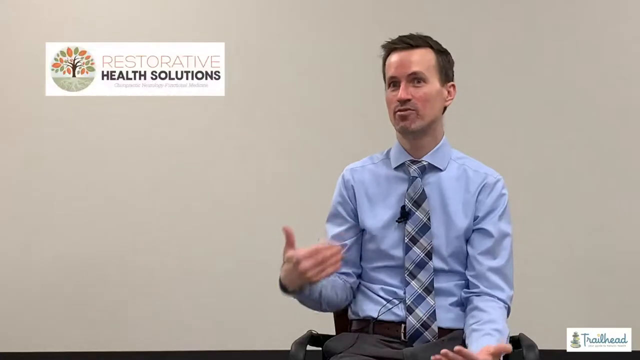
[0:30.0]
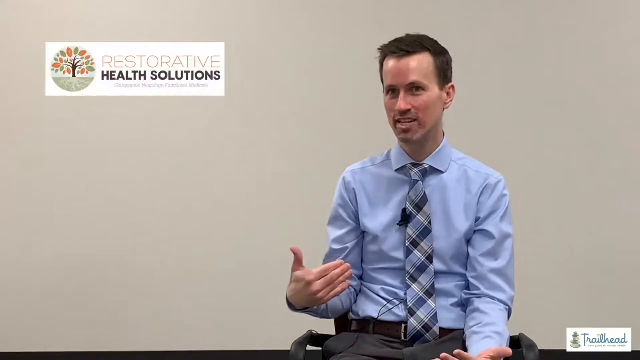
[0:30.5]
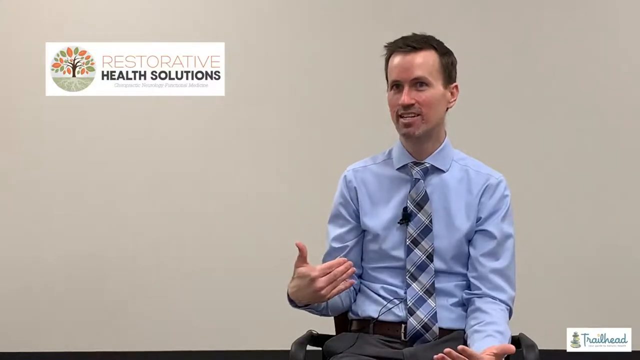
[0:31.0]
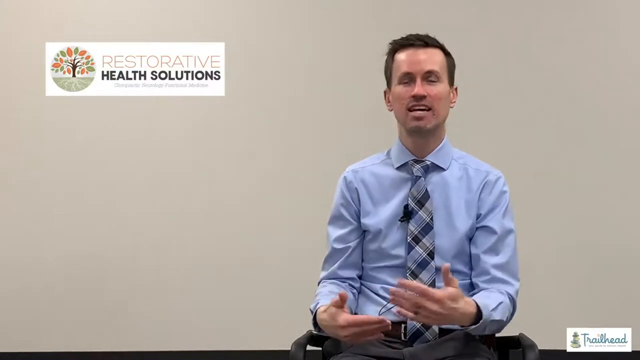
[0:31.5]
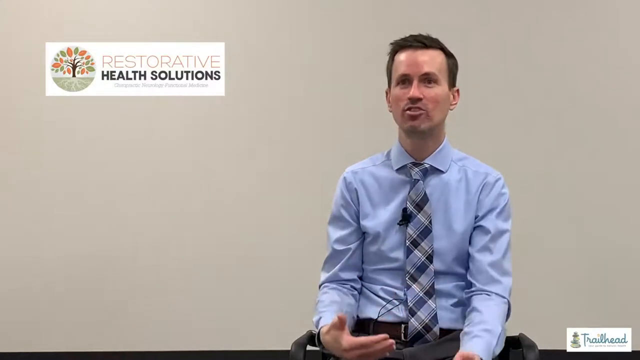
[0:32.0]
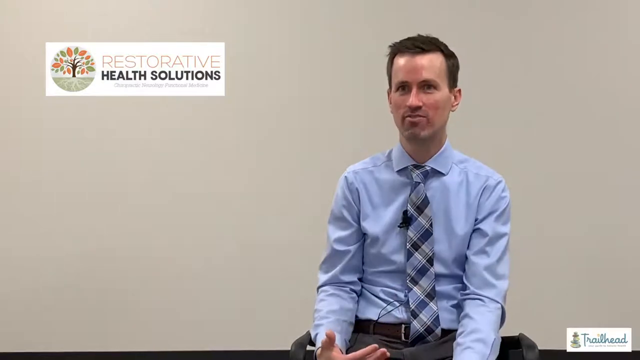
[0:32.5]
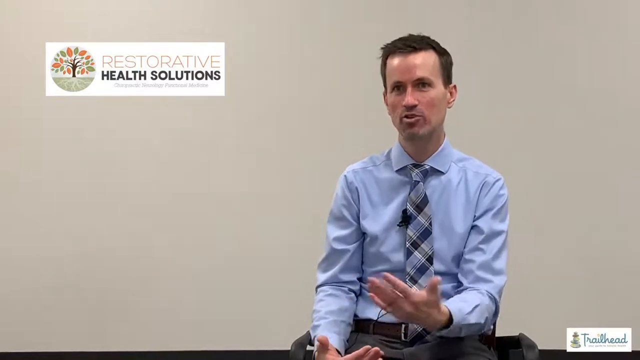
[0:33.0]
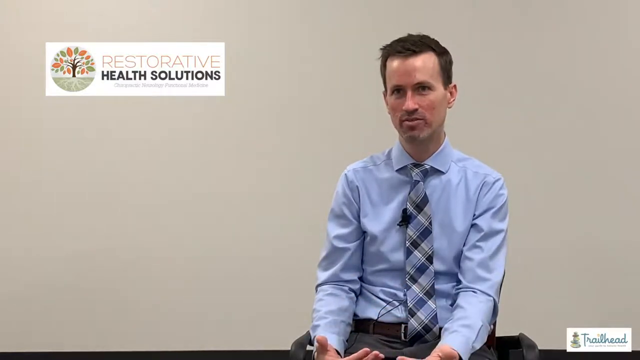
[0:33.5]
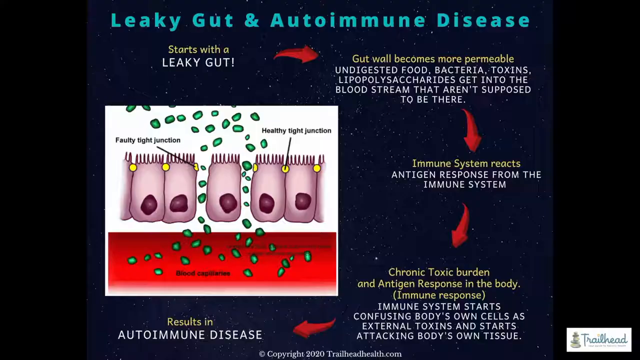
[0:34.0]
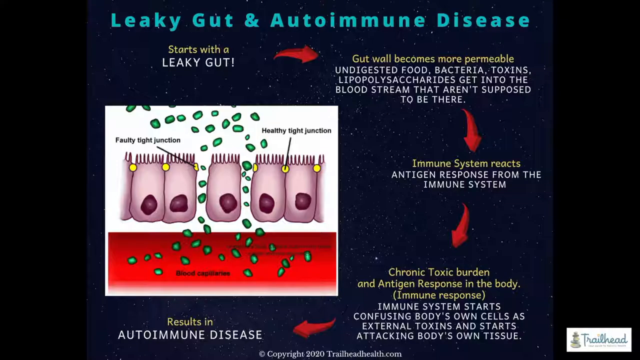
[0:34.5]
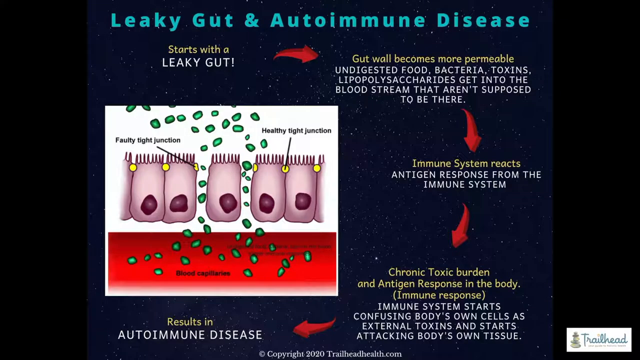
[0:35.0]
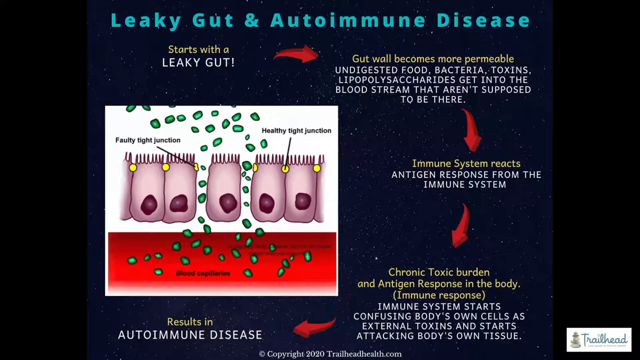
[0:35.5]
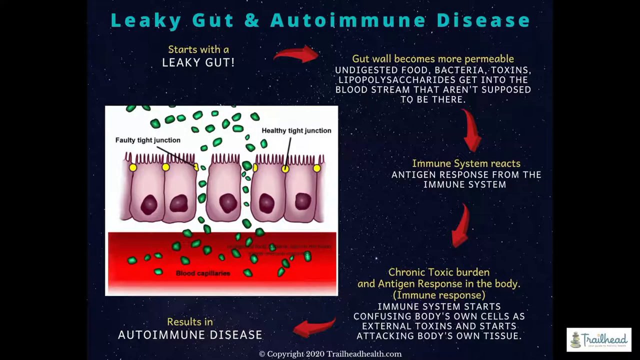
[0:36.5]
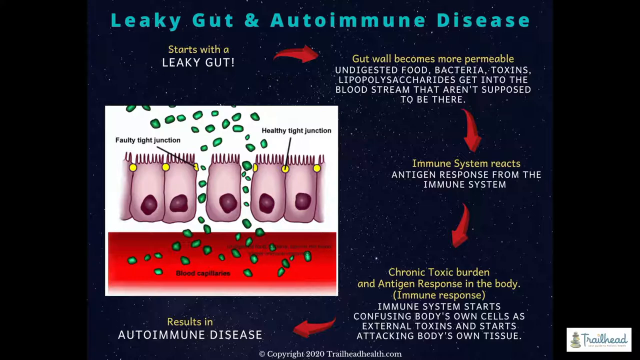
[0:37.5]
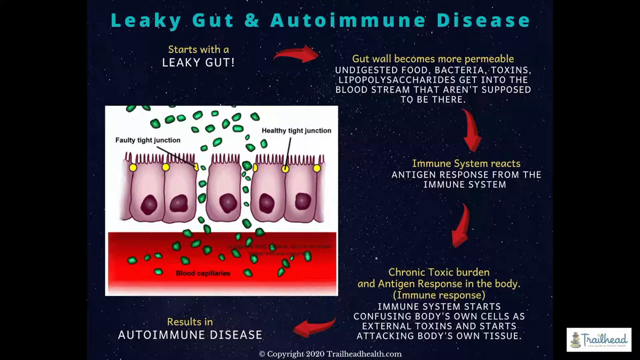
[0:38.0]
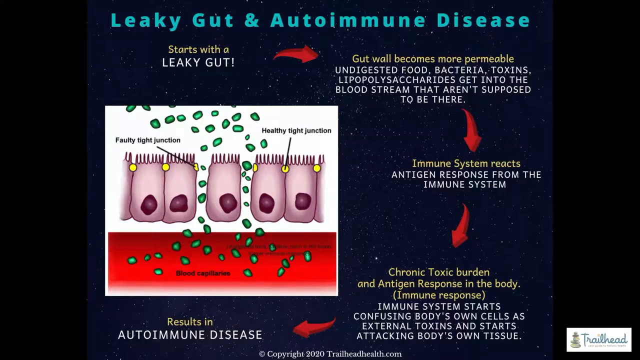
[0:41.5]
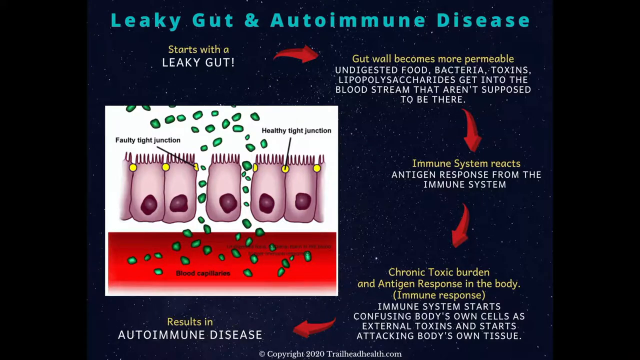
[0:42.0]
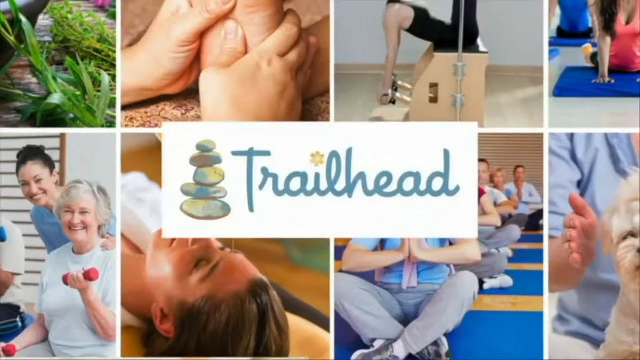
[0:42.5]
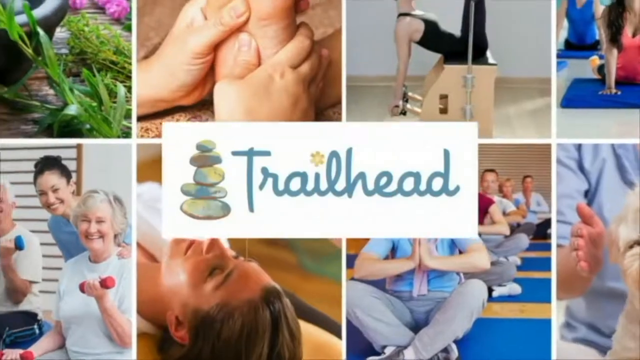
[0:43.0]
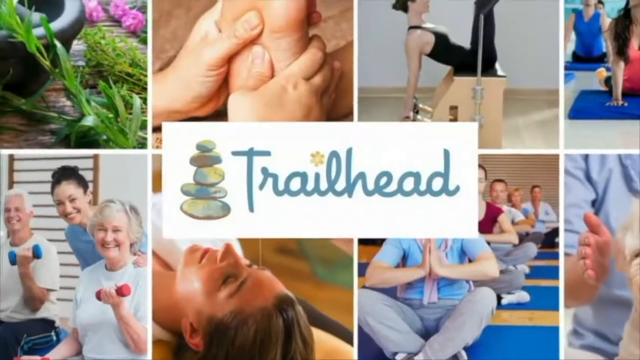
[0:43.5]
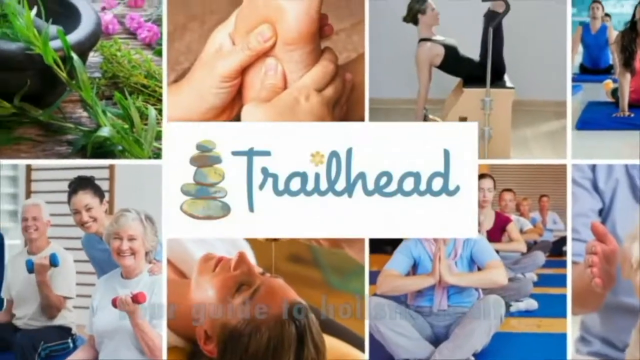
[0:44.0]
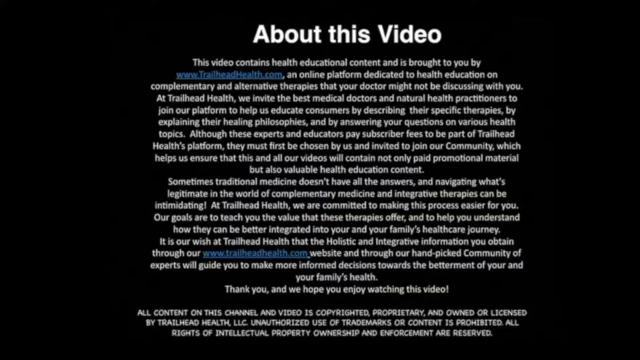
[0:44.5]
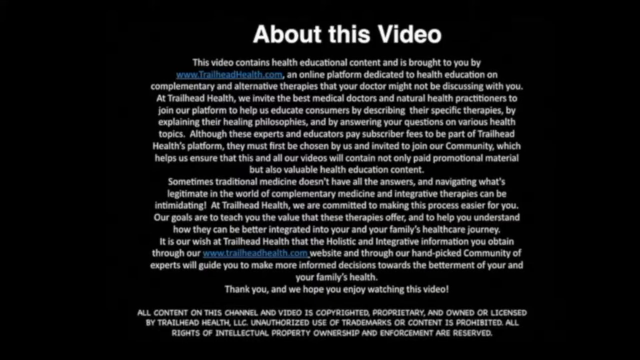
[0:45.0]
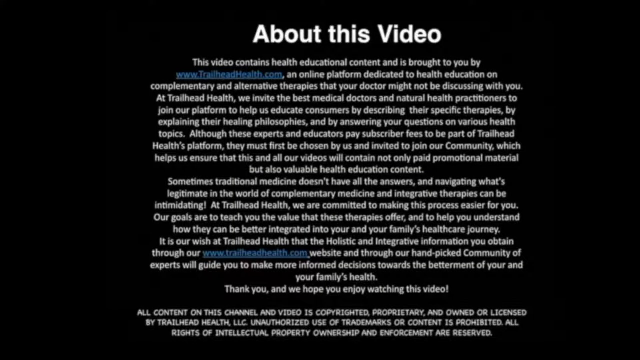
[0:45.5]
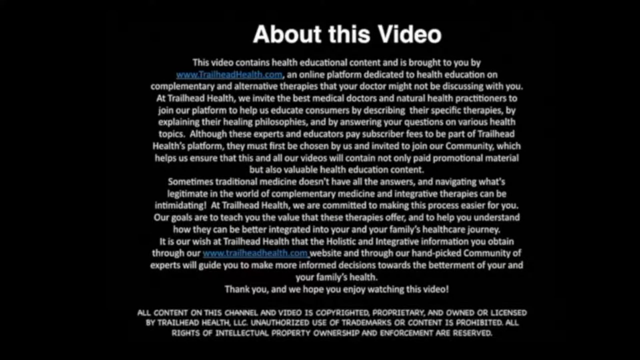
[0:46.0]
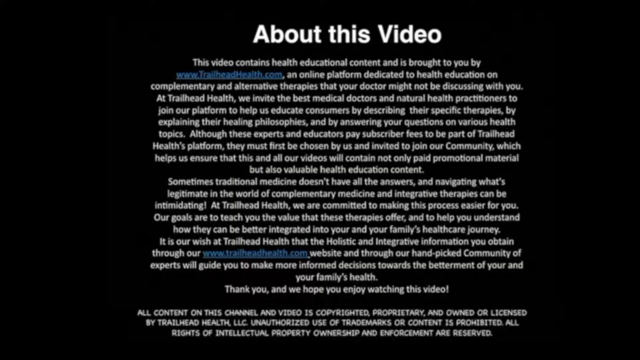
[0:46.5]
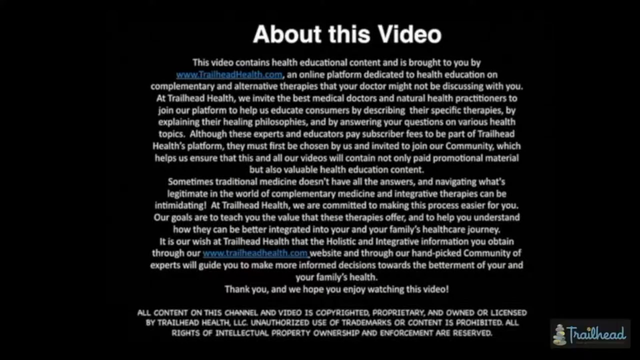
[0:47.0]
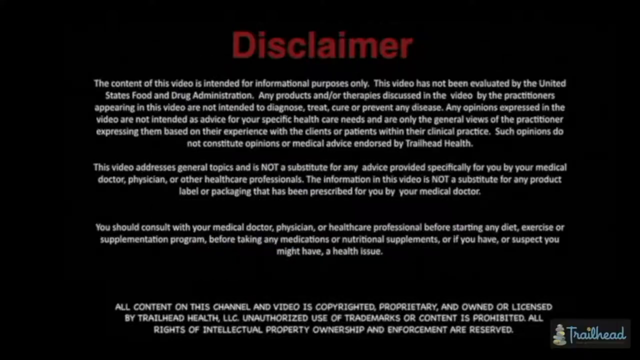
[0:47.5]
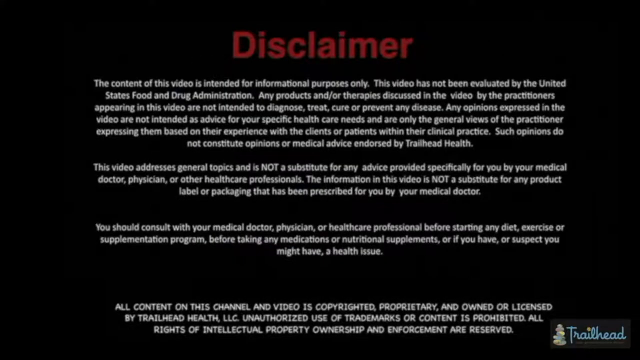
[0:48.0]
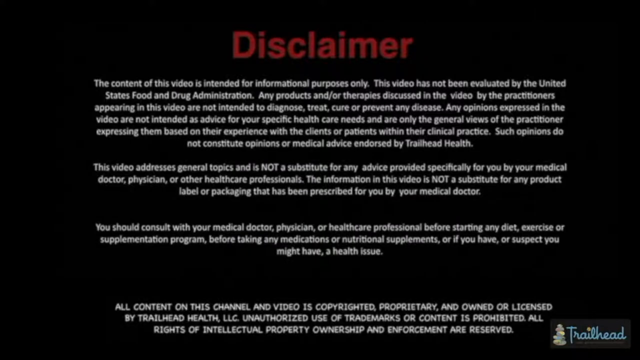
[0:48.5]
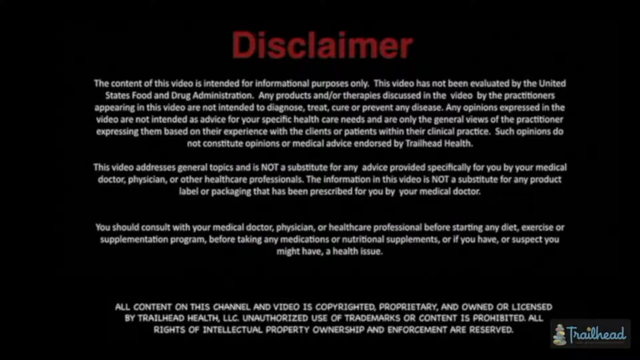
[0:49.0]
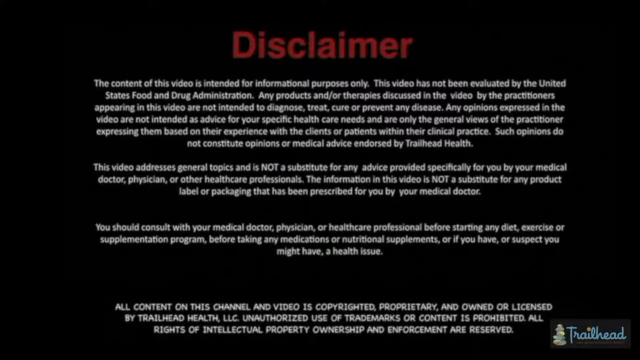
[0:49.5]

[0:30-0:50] A man sits at a chair or a stool in front of a very gray or opaque background. He has dark hair, appears to be very thin, and has a dark complexion and a small goatee. He wears a blue dress shirt with a striped blue, gray and black tie, and what appears to be black pants and a belt. He appears to be speaking. The video then moves to a page about leaky gut and autoimmune disease, with a diagram at the bottom that looks to illustrate how the cells and the gut work and combine together. Text at the bottom describes the immune system starting to confuse the body's own cells and attacking the body's own tissue, which the diagram illustrates.